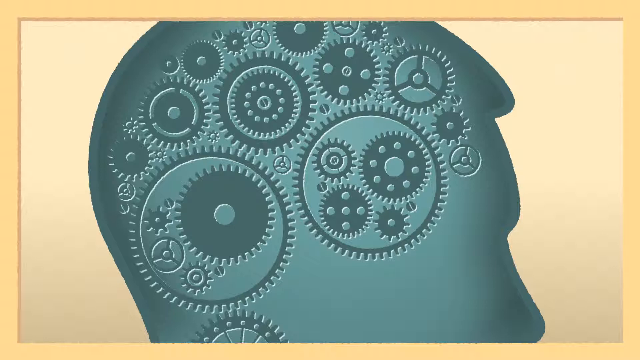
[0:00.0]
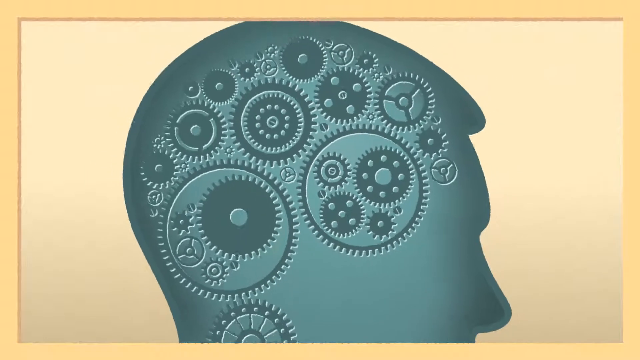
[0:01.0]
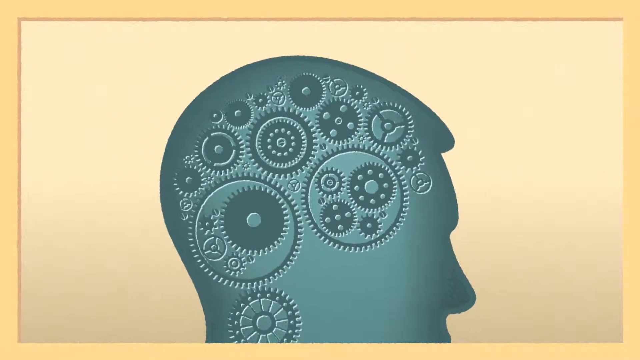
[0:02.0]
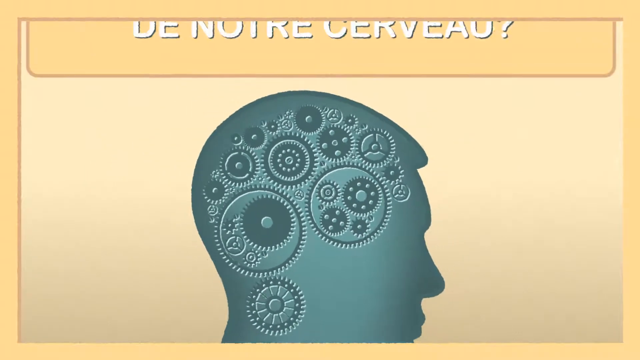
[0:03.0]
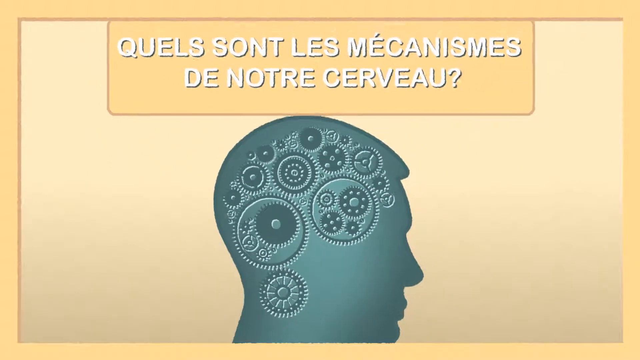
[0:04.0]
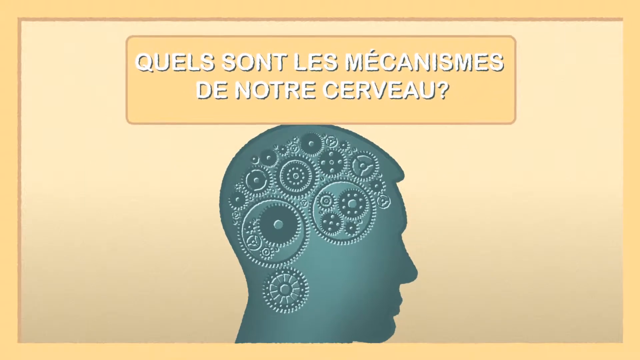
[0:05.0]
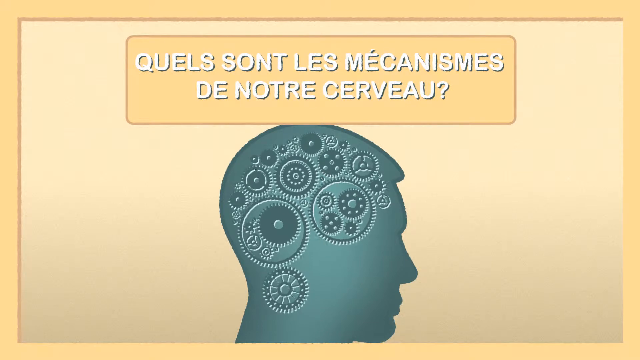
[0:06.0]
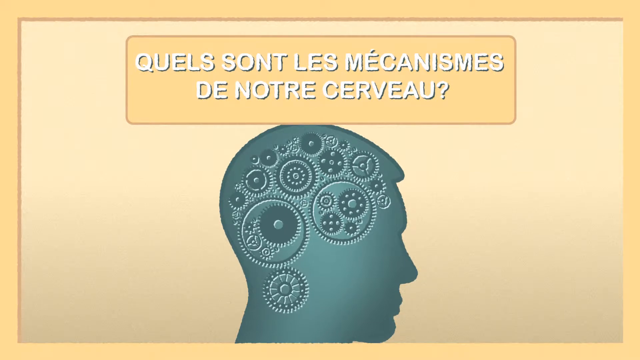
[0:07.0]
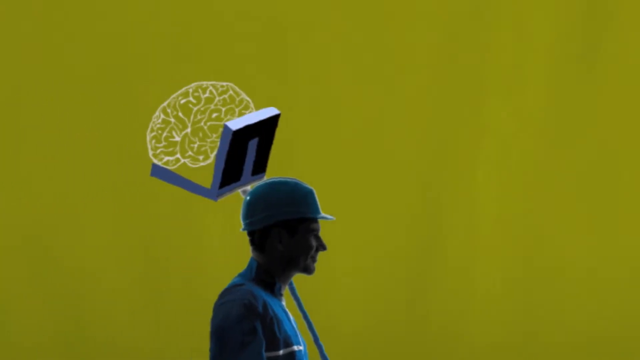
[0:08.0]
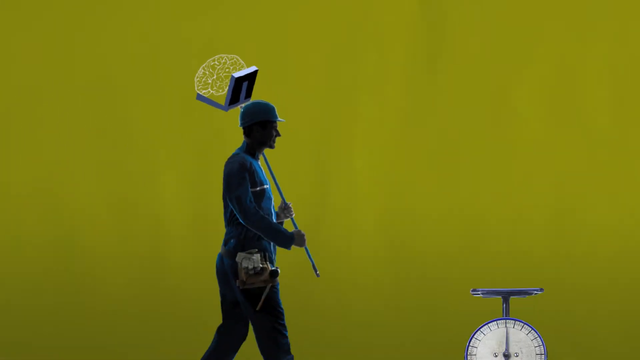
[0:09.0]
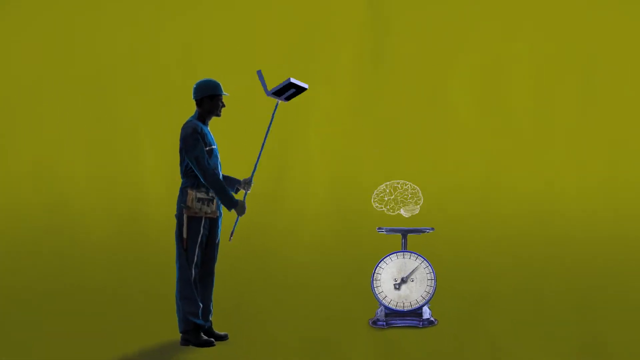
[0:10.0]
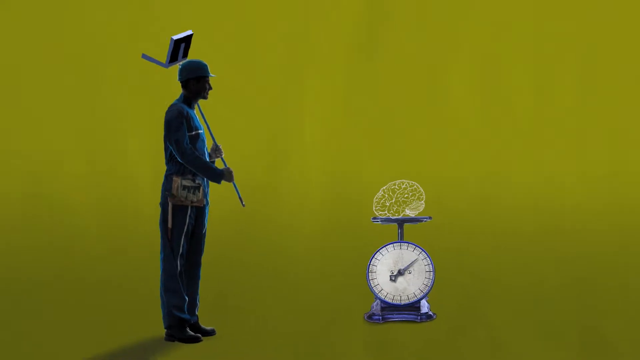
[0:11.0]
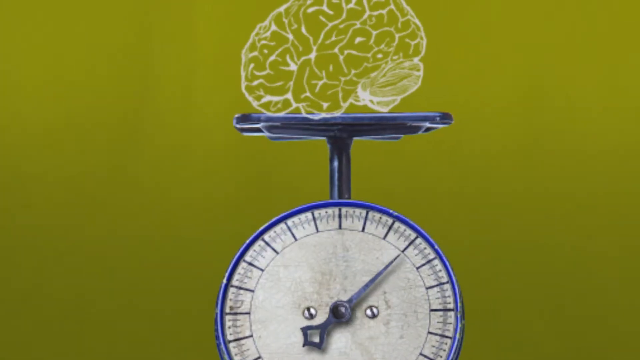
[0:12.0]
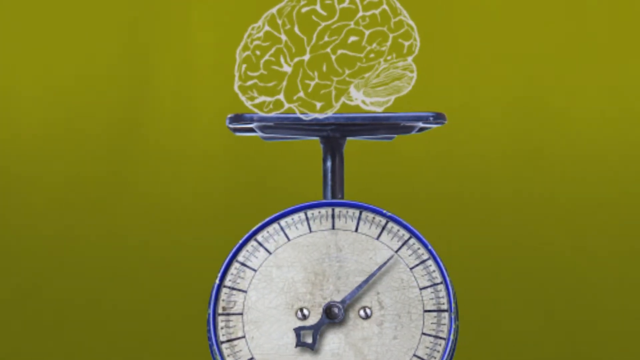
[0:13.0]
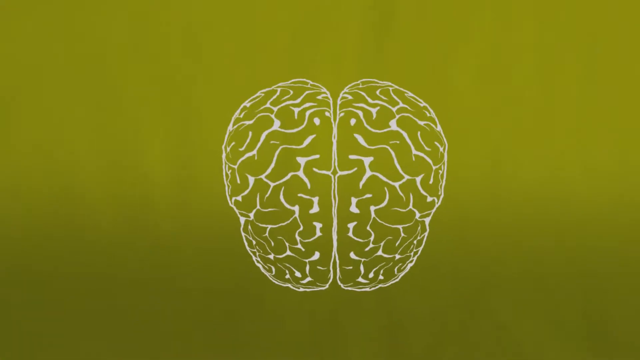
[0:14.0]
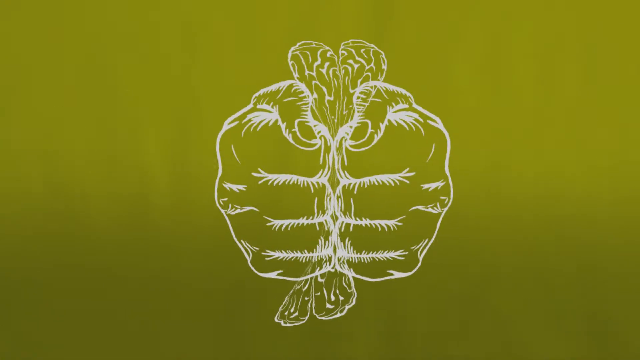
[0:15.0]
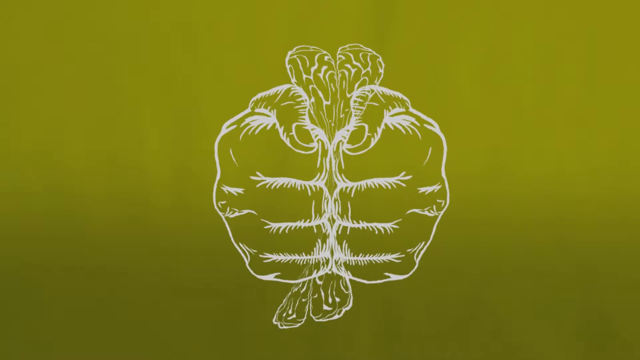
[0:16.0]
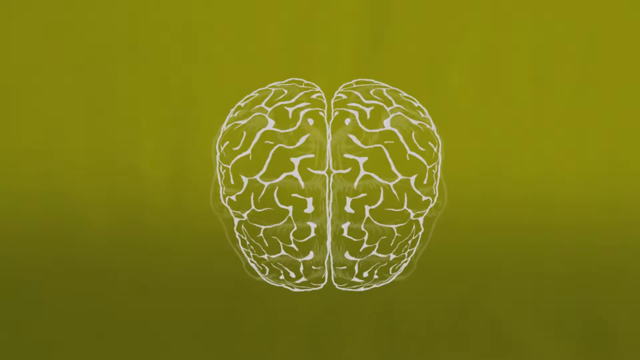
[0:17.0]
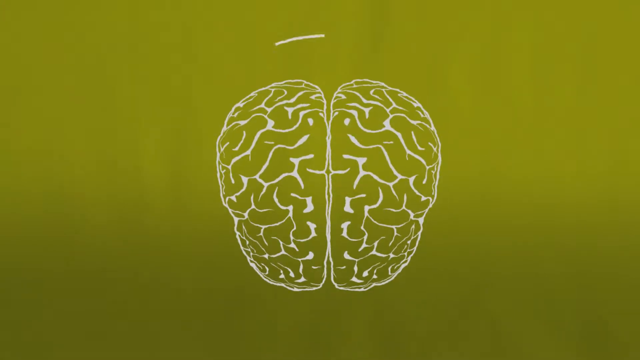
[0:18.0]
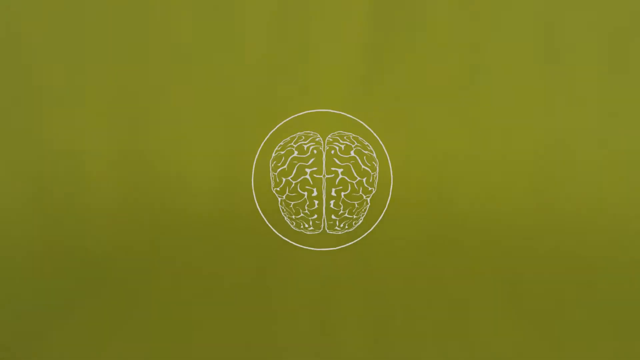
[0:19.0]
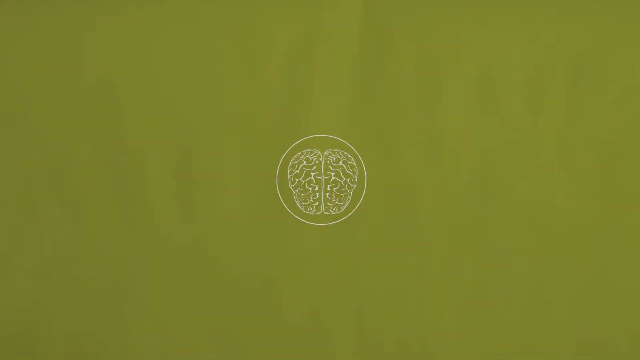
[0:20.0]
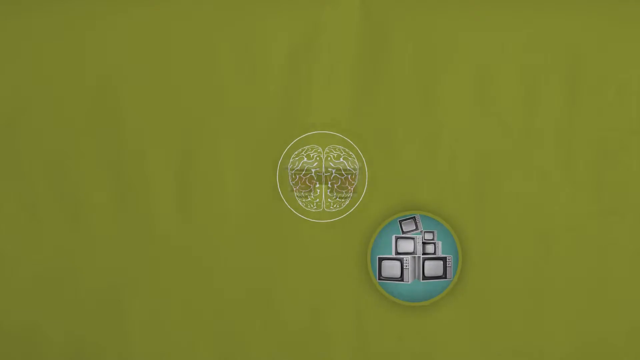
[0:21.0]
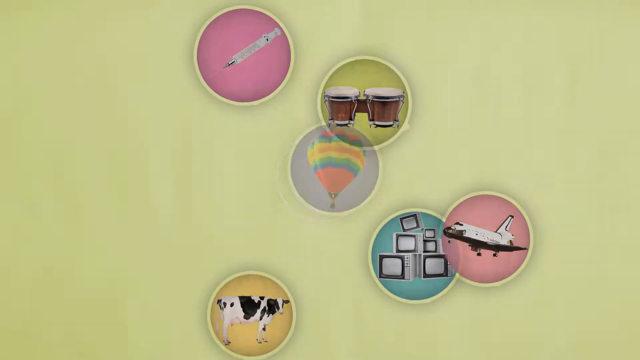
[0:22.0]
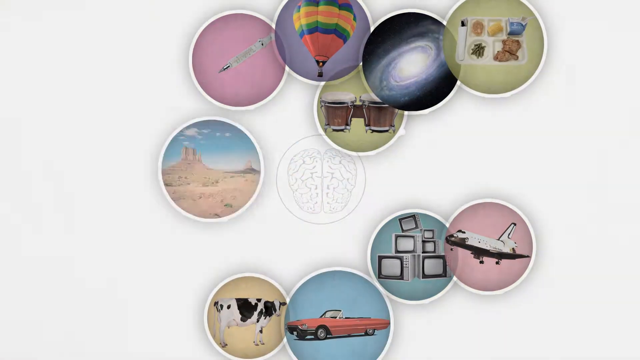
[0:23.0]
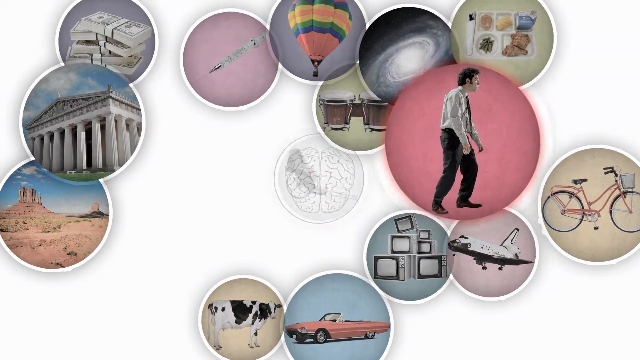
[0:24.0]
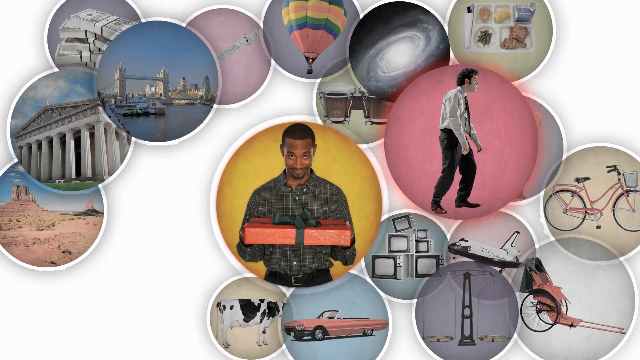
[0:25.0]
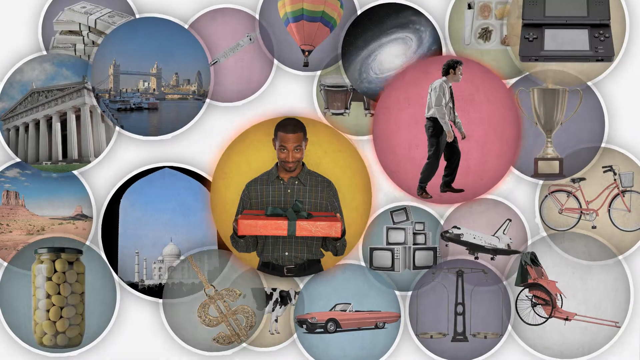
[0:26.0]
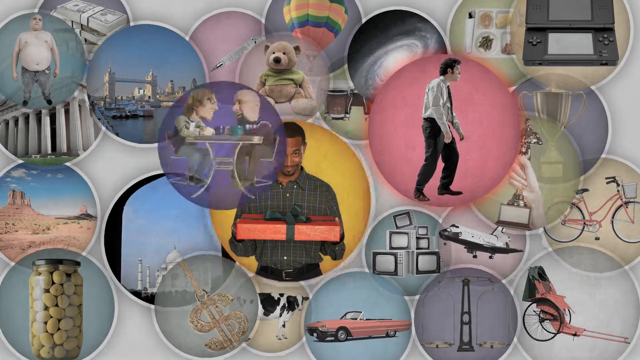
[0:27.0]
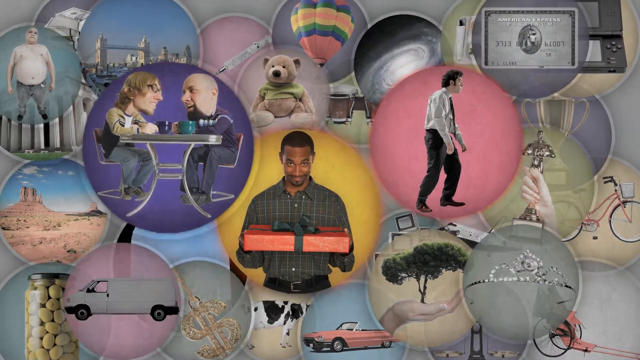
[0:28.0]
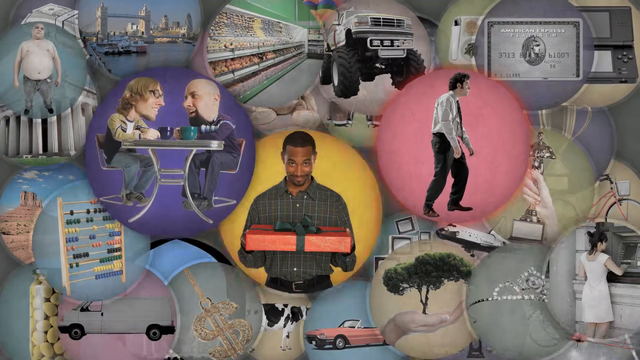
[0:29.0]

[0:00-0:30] The video appears to be about the brain in some way. All types of bubbles pop up, showing different aspects of life, and the imagery centres on the mechanics of someone's brain. A brain is weighed and a brain is squeezed, and something is possibly suffocating the brain. The brain is filled with music, balloons, TVs, presents and awards, with a great deal going into it. There are many gears in the head, along with ideas a person would be thinking about.